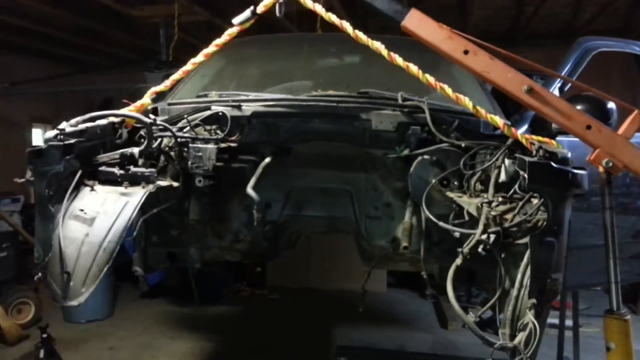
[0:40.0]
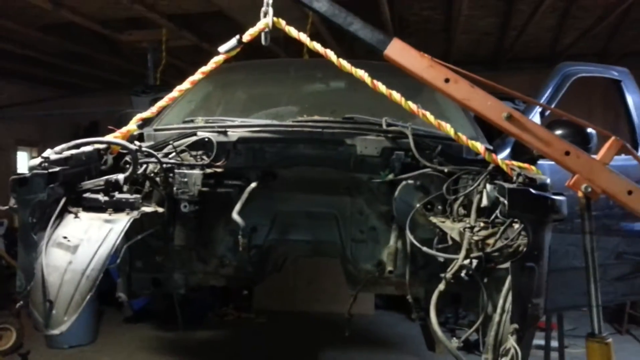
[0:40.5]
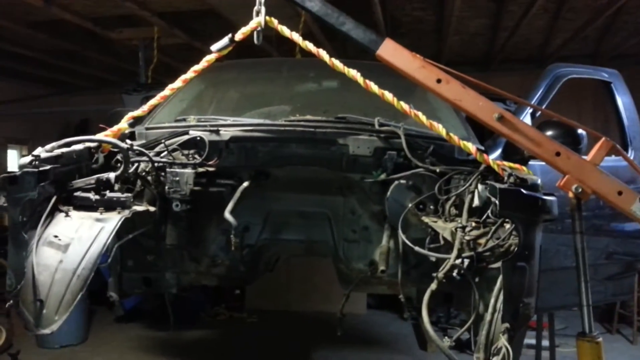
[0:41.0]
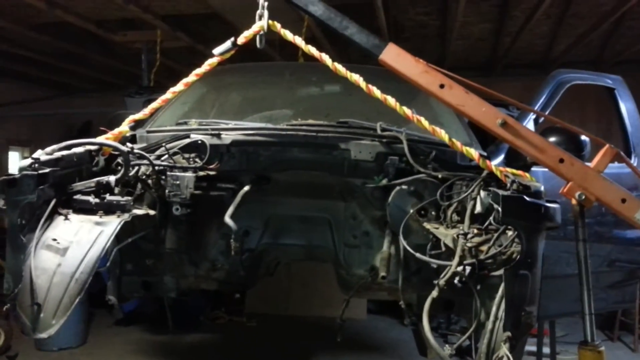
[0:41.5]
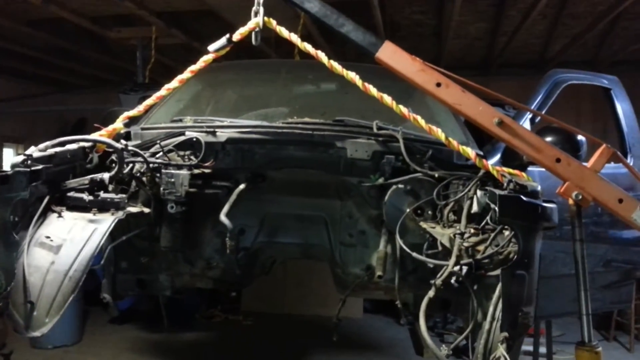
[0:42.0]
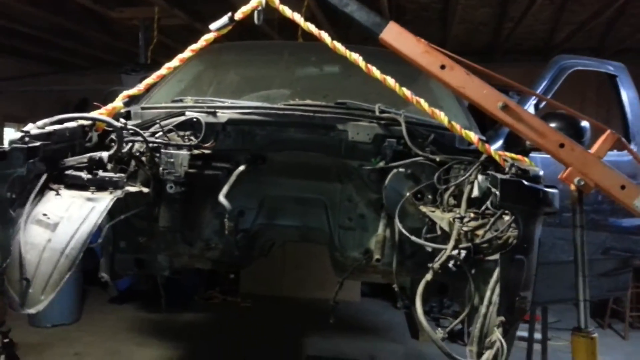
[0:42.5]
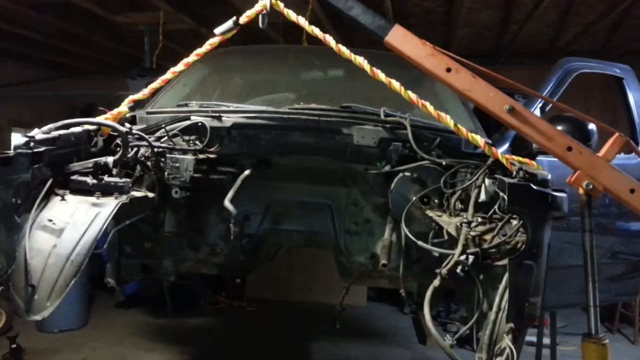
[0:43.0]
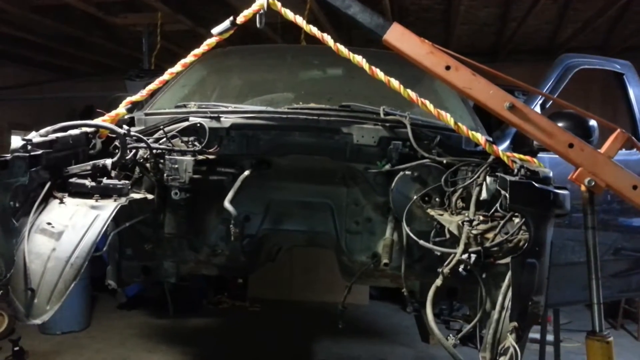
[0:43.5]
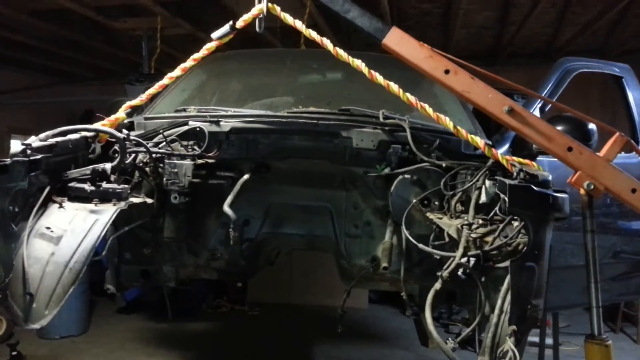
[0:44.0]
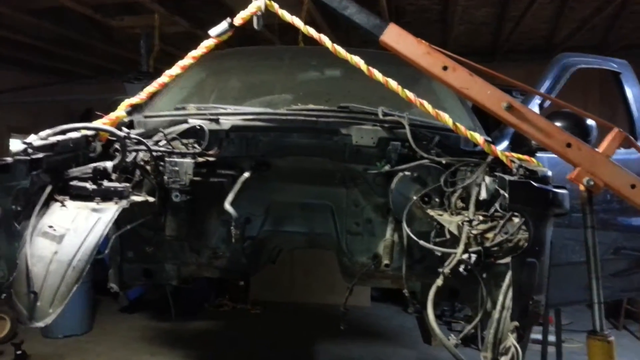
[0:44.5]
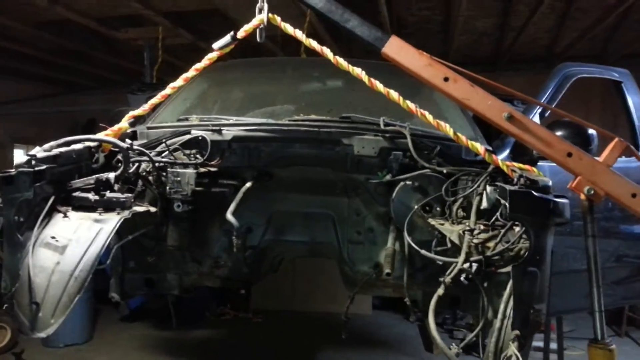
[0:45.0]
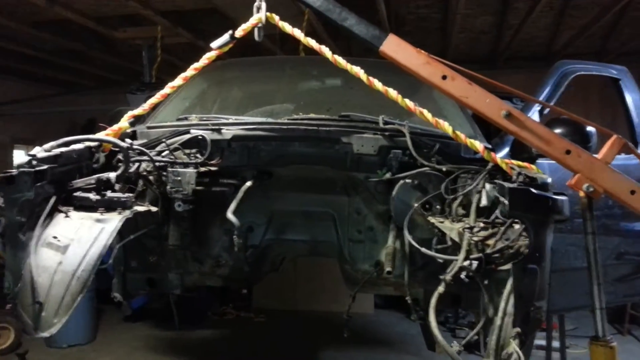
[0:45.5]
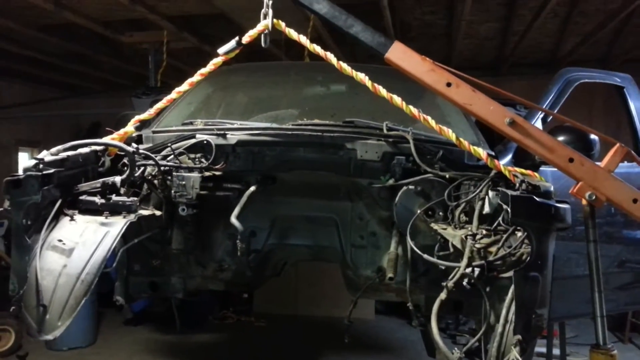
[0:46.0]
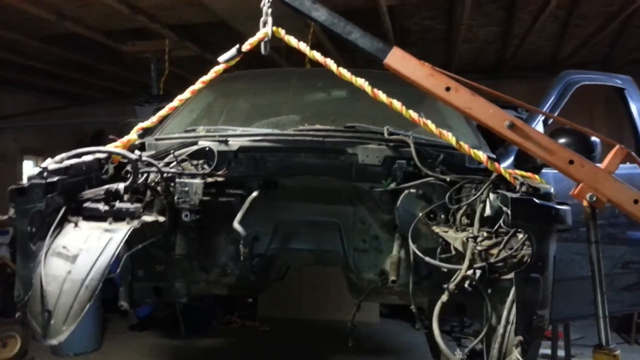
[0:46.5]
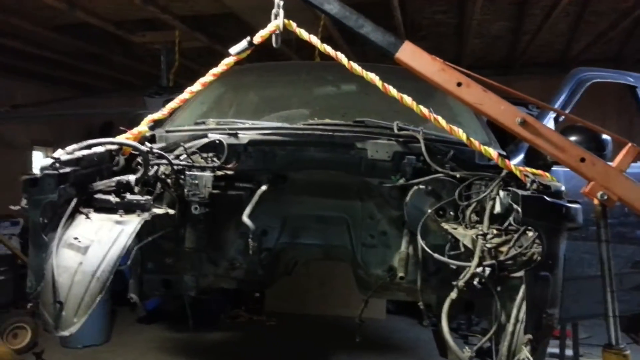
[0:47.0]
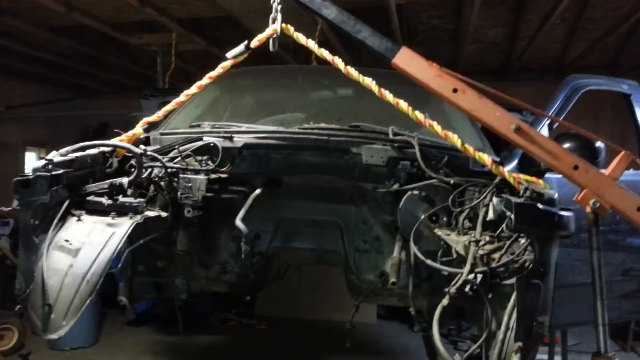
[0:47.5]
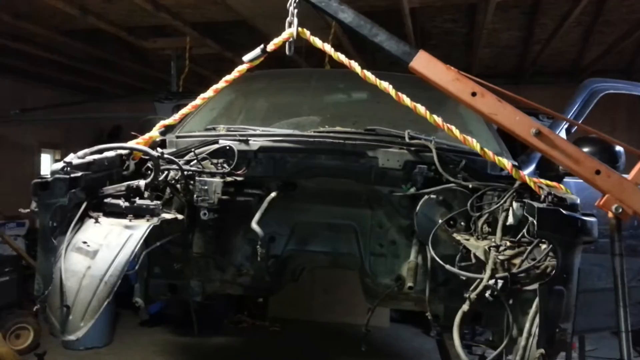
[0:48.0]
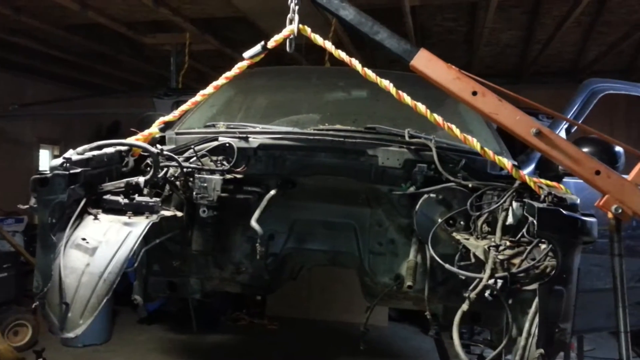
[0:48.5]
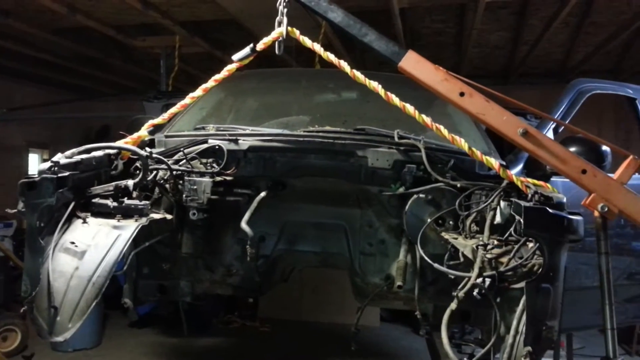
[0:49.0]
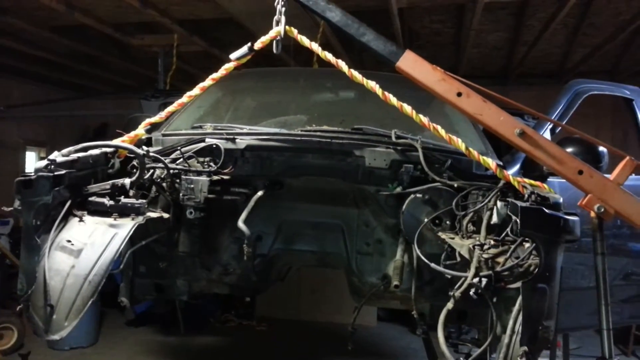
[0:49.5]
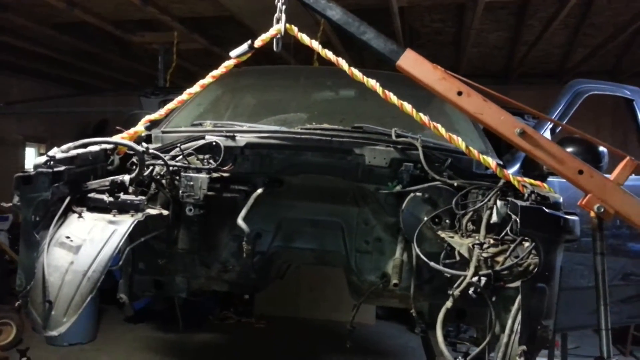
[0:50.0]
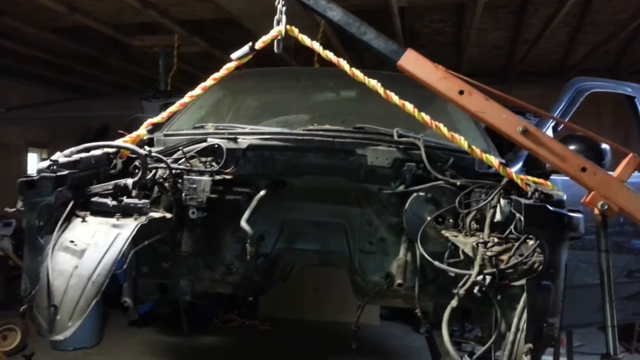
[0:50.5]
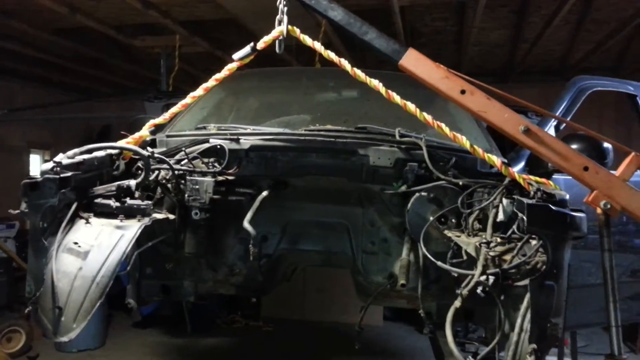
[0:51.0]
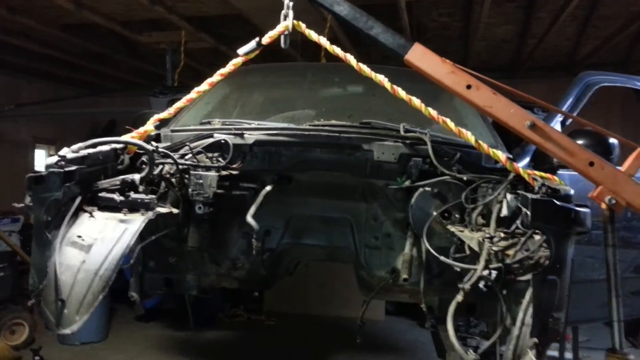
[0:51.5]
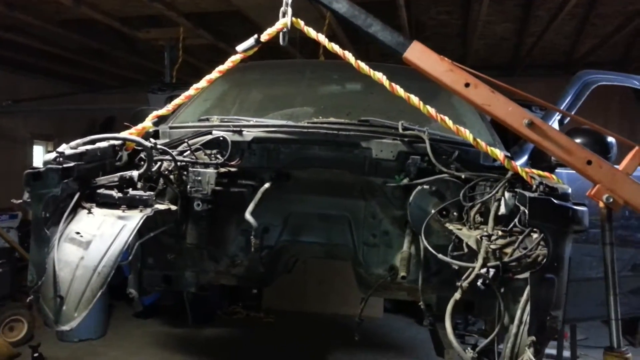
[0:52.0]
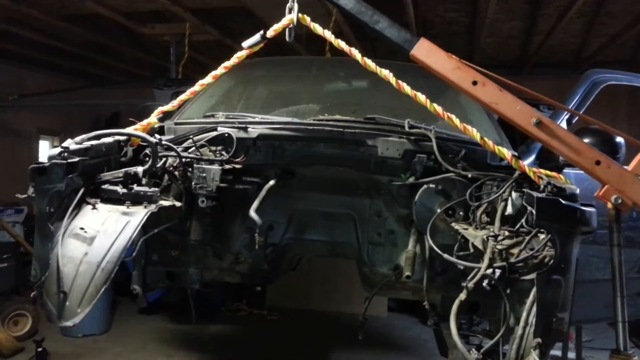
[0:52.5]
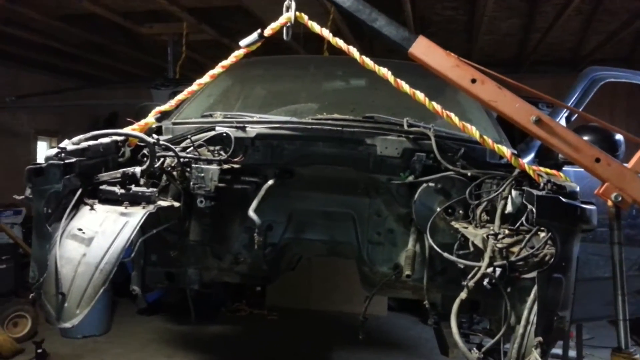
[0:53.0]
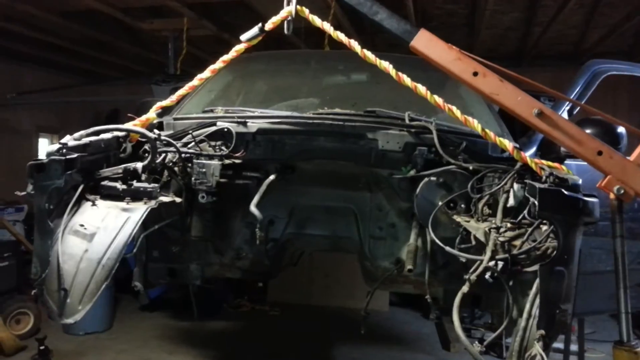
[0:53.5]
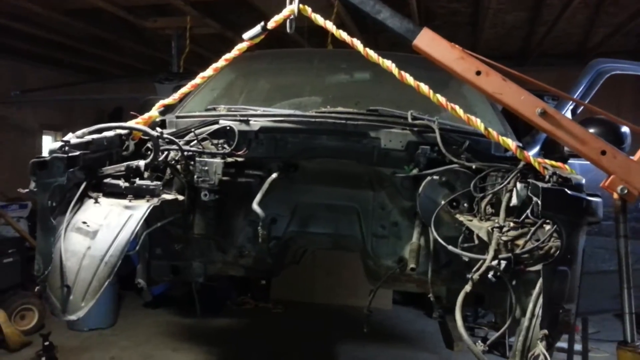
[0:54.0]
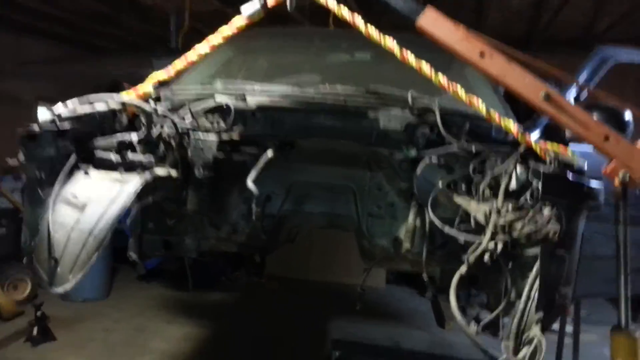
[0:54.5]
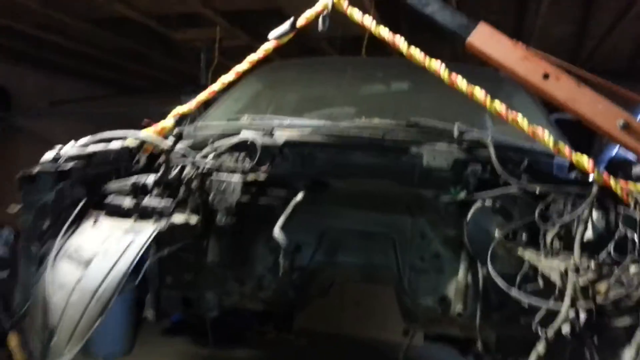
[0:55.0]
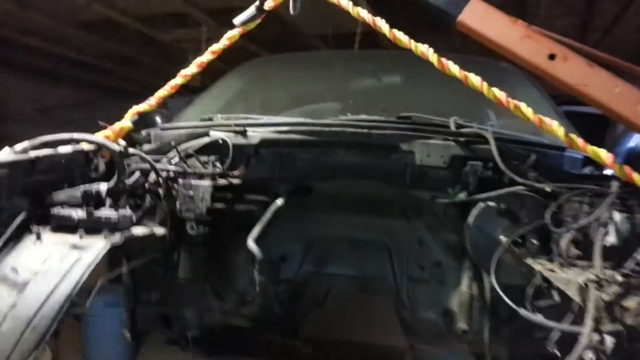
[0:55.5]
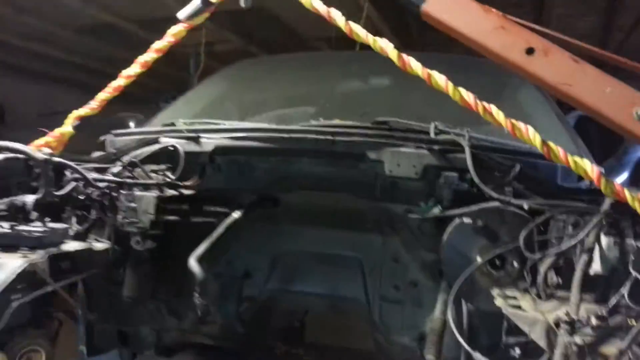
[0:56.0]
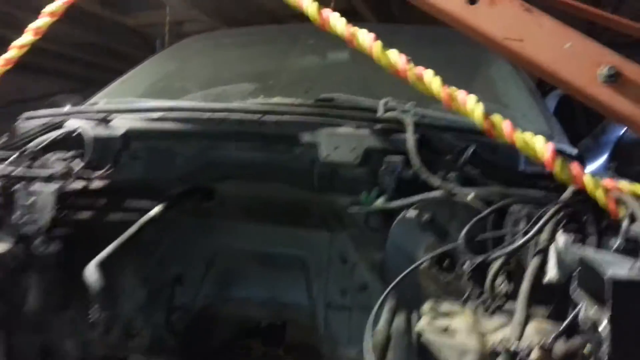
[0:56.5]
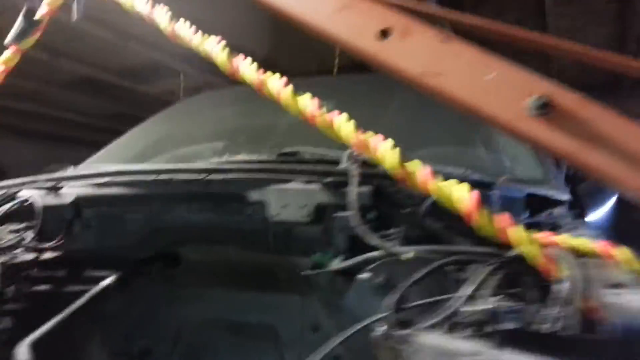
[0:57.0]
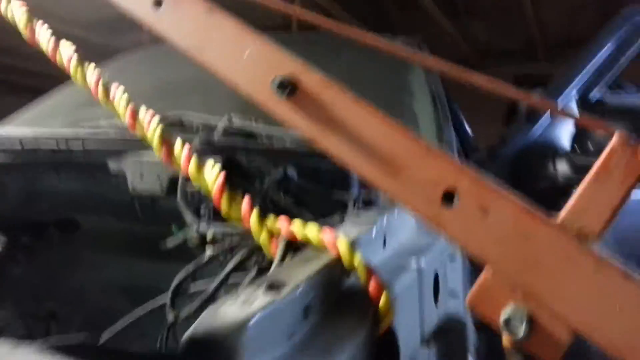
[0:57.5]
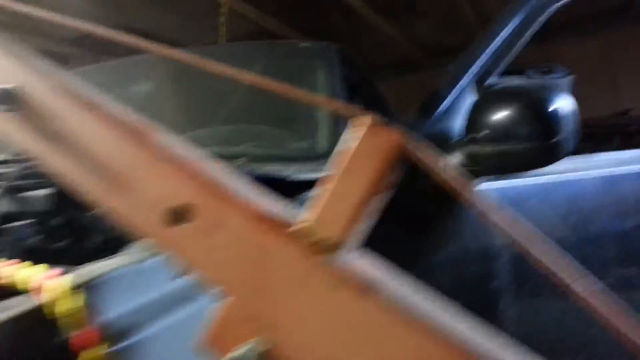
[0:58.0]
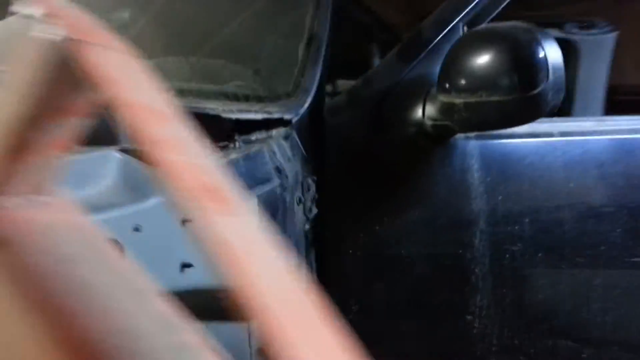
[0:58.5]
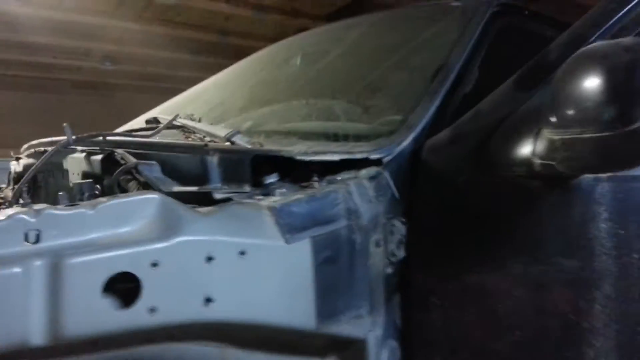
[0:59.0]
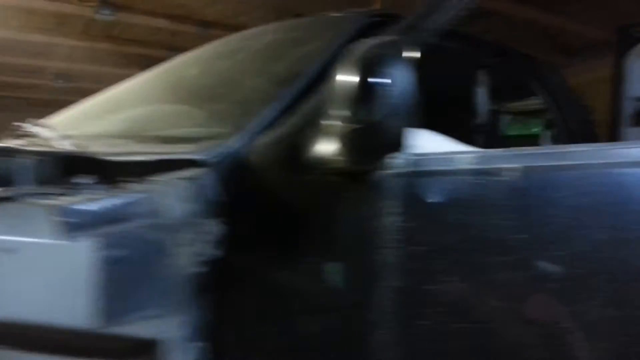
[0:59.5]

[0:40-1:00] For a while the camera stays fairly close to the car, which fills the entire frame, with a strong side-to-side shake somewhat like an earthquake. The person filming then moves very close, into the center of the car where the inner workings and parts would typically be, giving a close-up of the rope, which is made of twisted yellow strands. The camera then moves around to the right side and closes in on the door, revealing that the car is actually dark blue. The crane holding it up is either light orange or red. Part of the front side panel appears to be missing, and there is a lighter blue color near the front of the vehicle. The camera moves down the door, and the window glass appears to be either missing or rolled down.